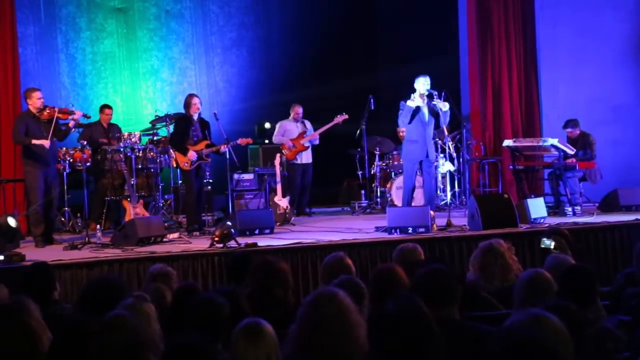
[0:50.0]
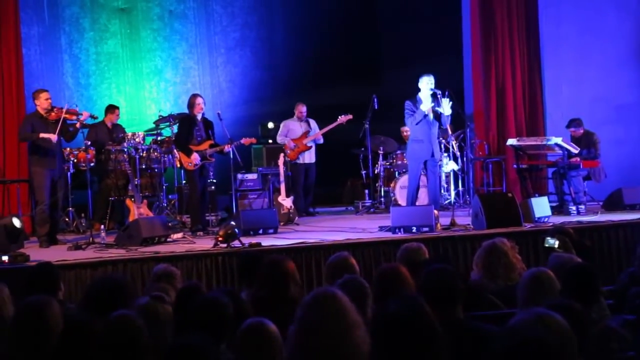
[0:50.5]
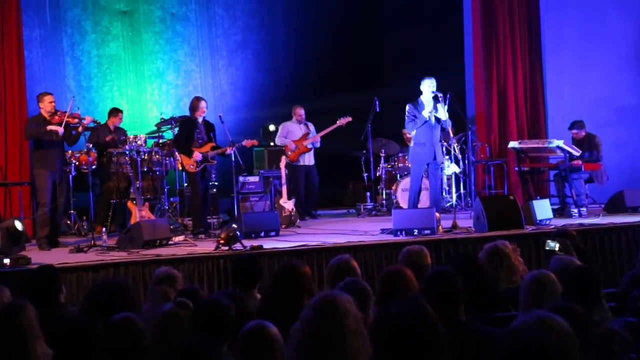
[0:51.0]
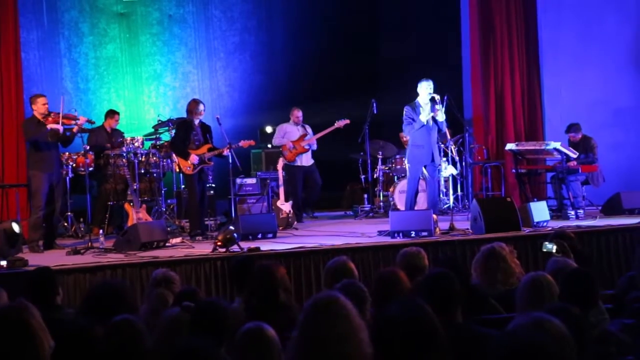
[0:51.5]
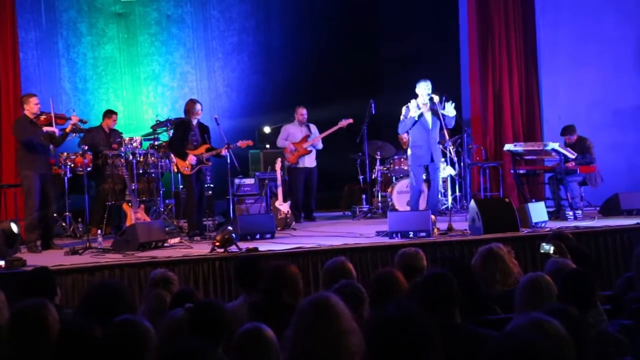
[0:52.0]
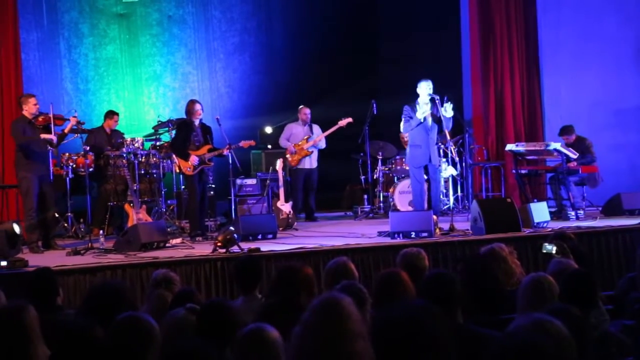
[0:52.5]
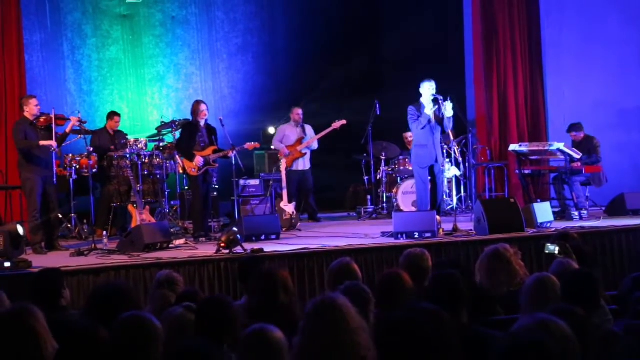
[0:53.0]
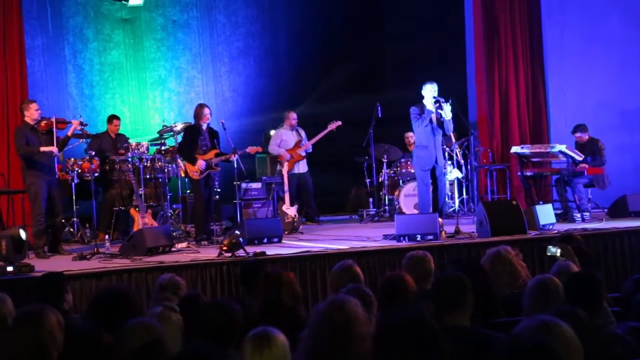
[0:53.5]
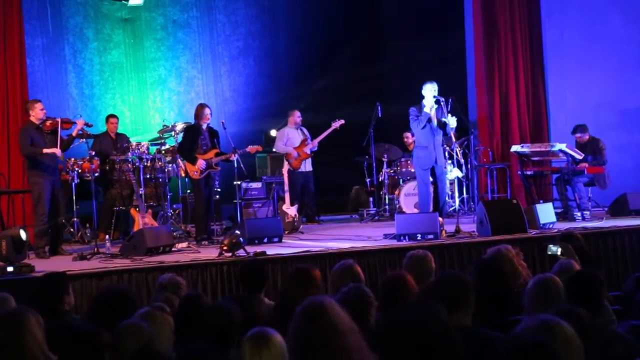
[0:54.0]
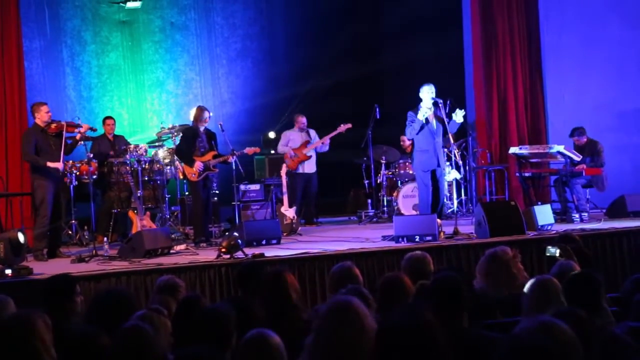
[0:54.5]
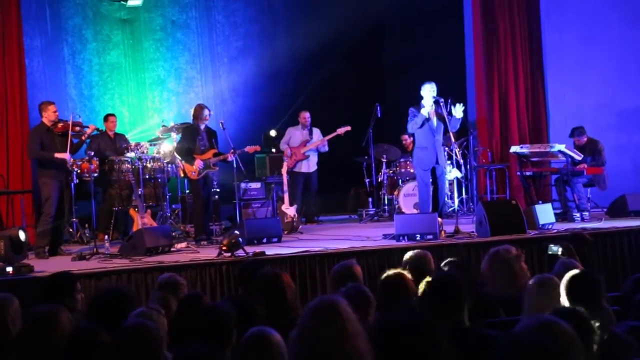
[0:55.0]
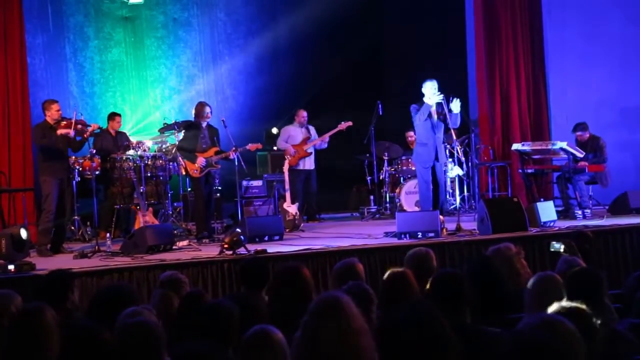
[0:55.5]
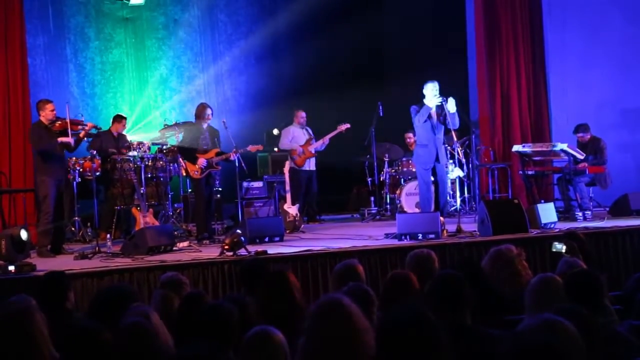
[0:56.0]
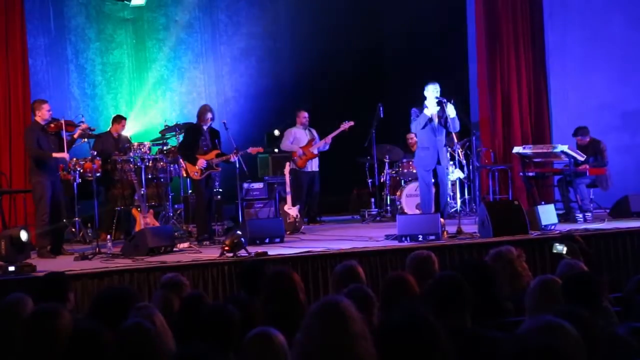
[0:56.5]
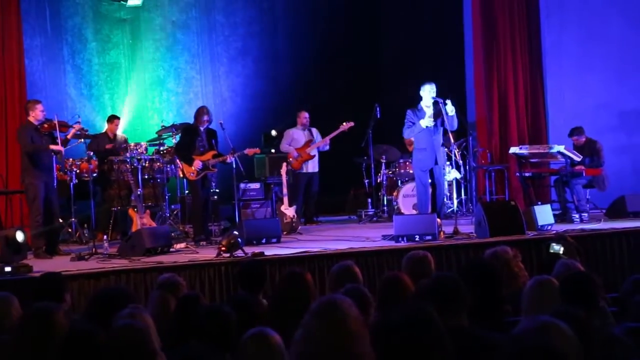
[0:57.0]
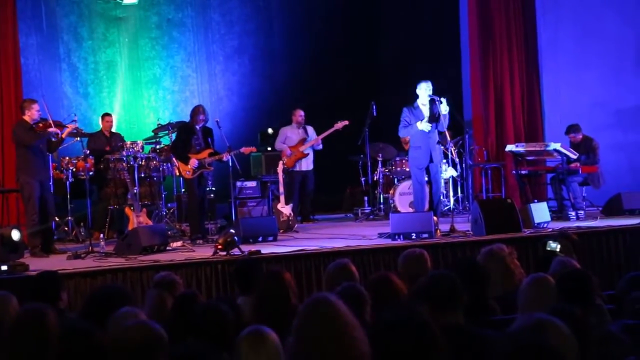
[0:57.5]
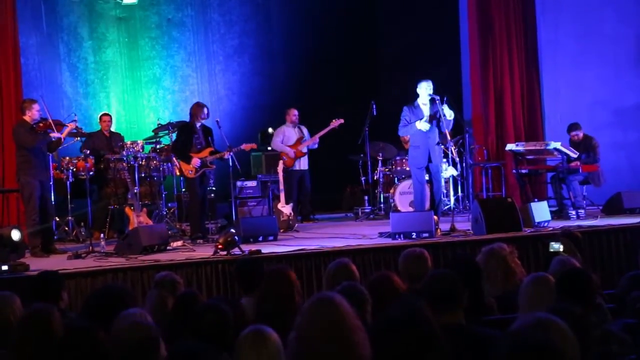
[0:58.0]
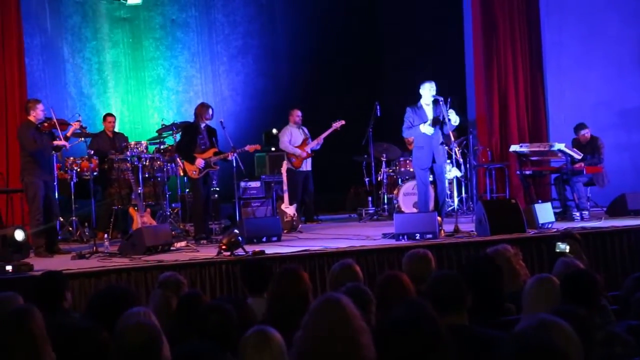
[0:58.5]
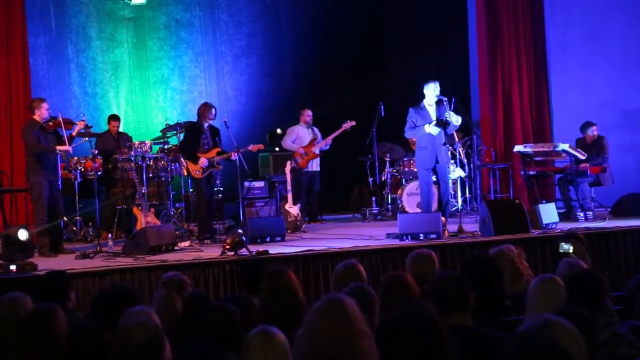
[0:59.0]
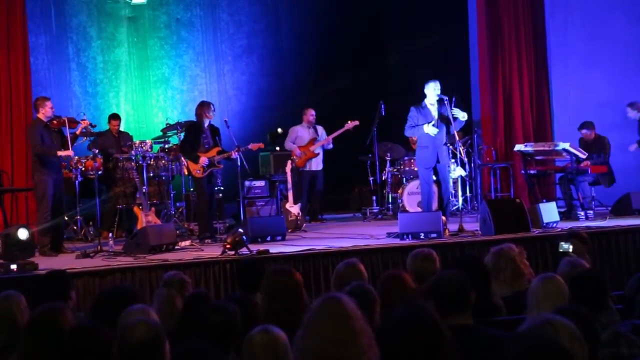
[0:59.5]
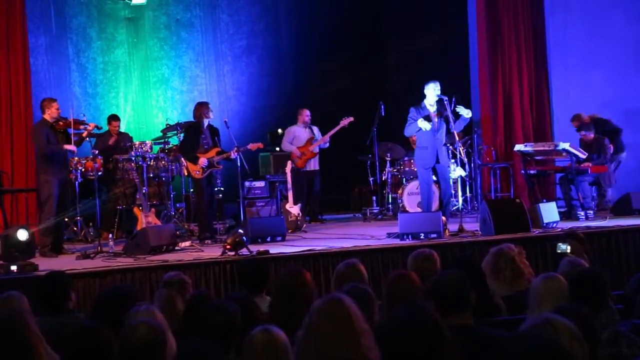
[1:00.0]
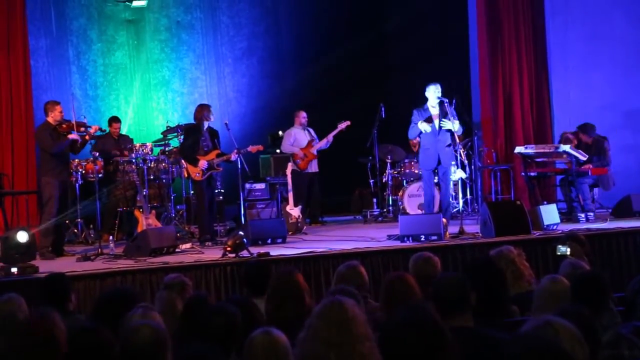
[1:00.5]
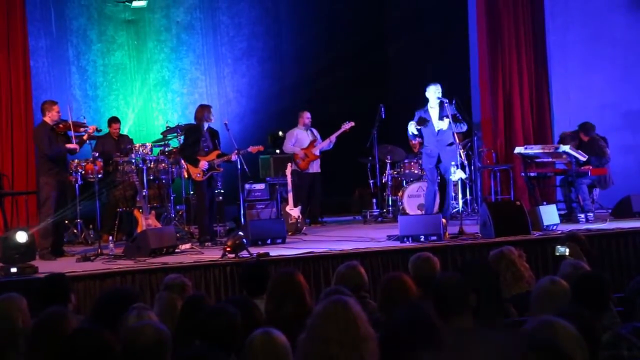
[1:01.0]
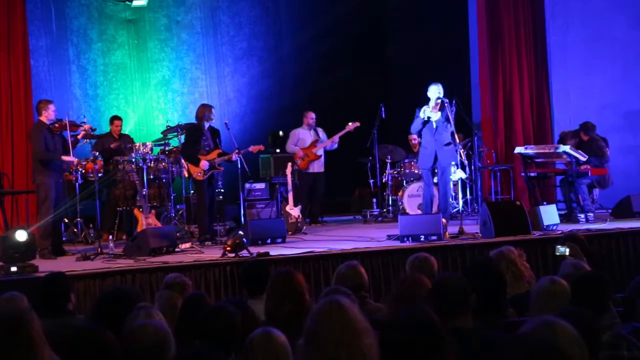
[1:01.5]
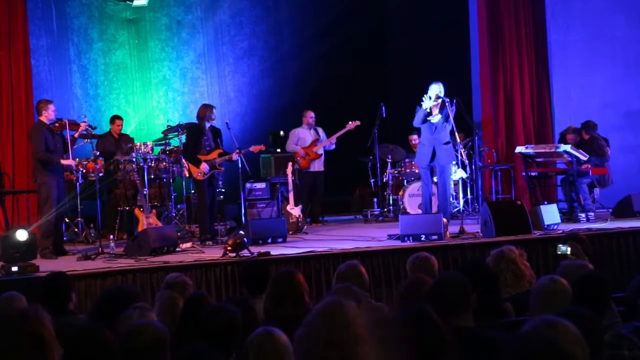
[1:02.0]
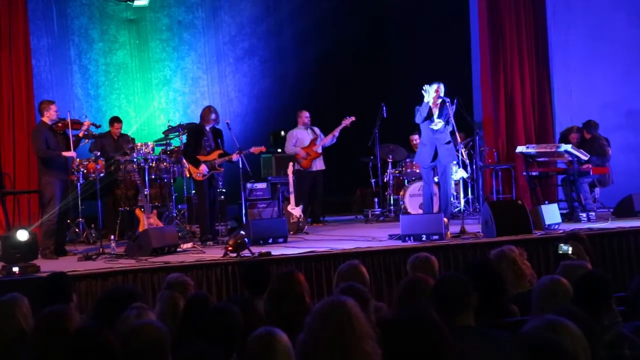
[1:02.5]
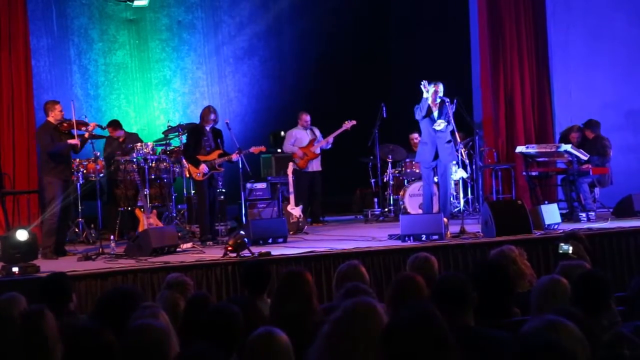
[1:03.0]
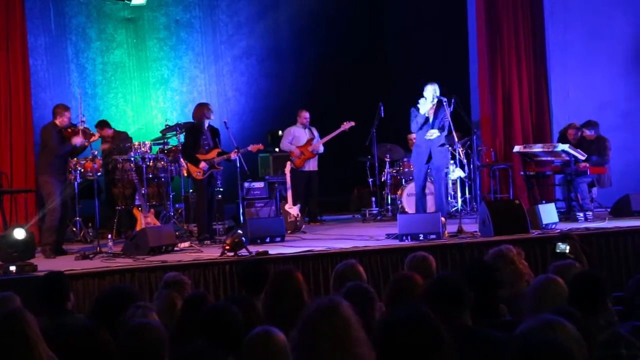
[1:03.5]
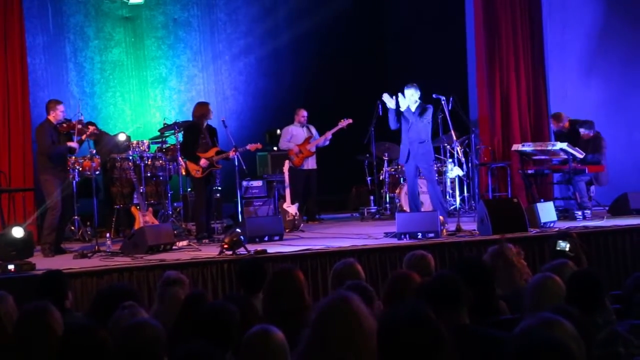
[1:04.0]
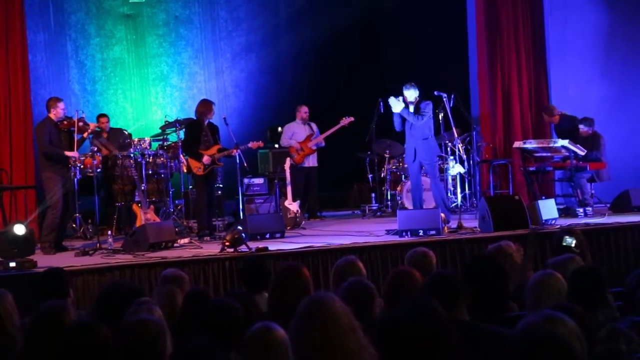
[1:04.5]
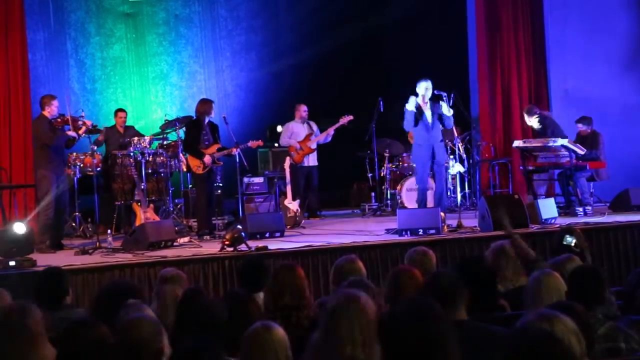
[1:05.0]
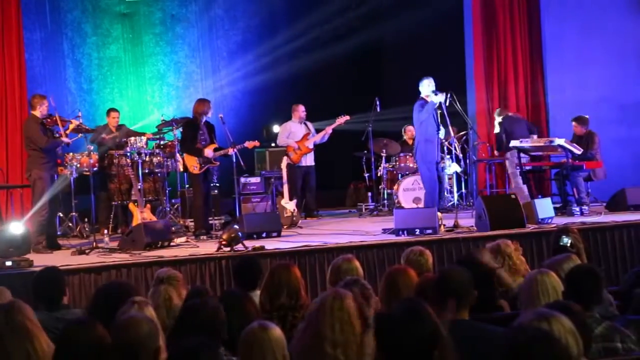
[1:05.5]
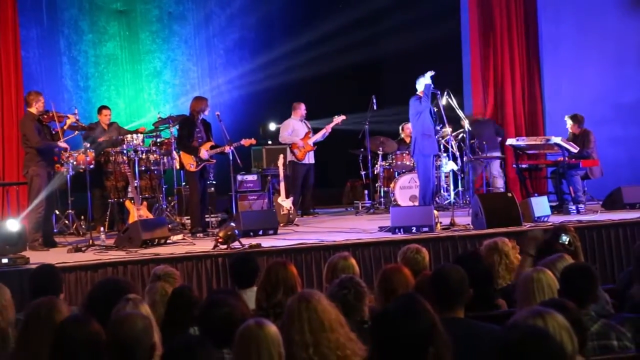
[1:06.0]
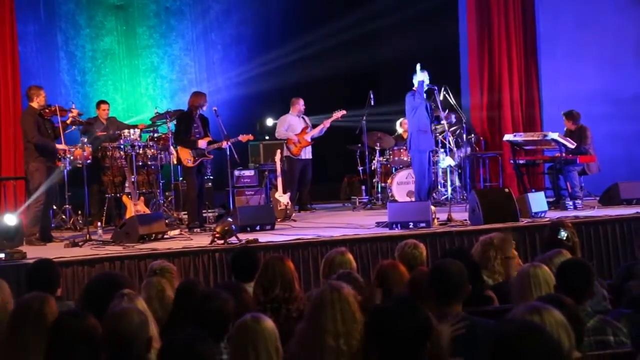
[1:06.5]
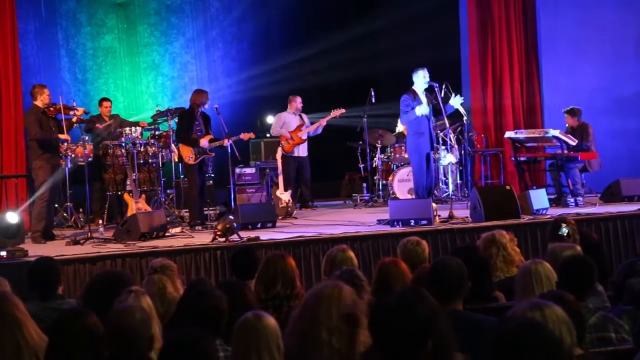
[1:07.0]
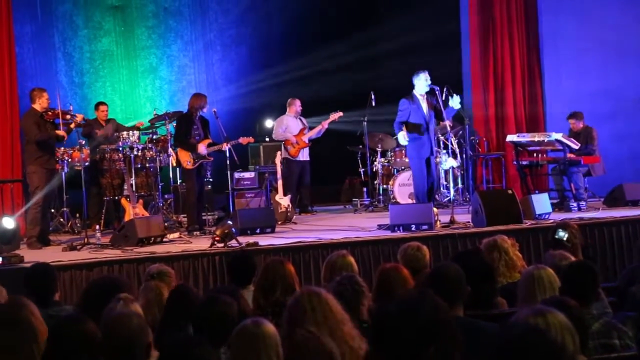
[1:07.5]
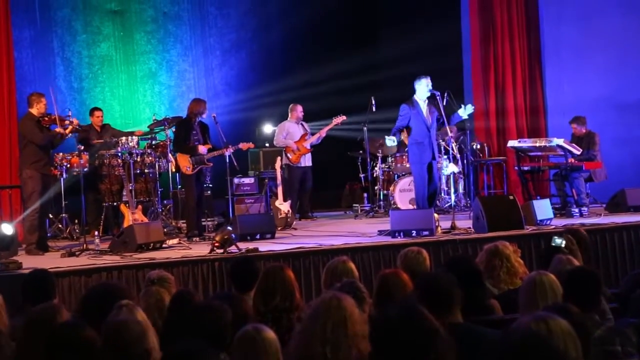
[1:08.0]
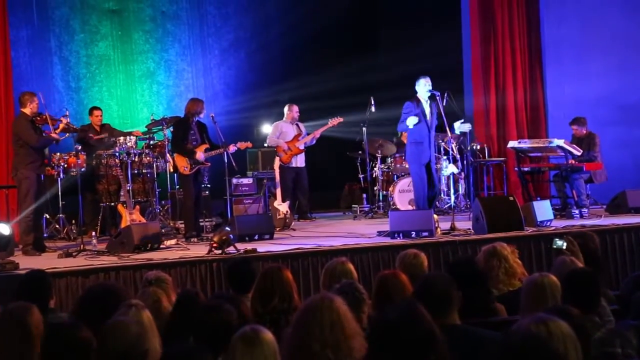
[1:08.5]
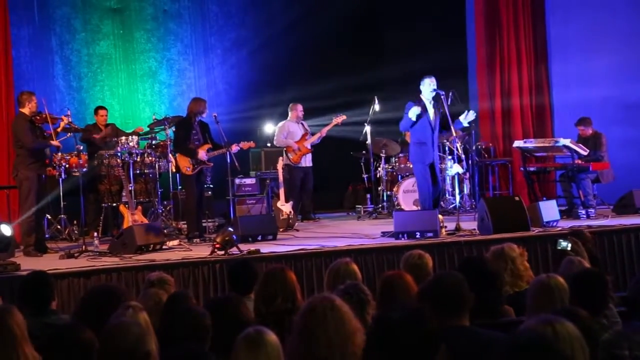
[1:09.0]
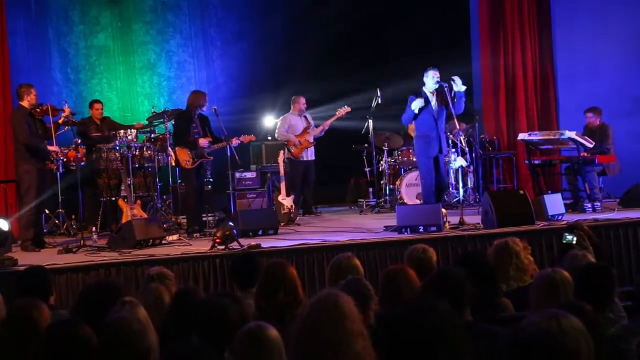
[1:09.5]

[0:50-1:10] The stage has a blue glow, and the center of the backstage is a little aquamarine. The singer's face is completely covered in light, as are his hands. He sings passionately, moving his arms and legs, and makes something like a clam motion with his hands, then a shoe motion. For the most part he keeps his hands to his side, close to his face, making a lot of hand gestures. The rest of the band members are not very expressive and just play their instruments; no one is standing except the keyboardists and the two drummers. There are many amplifiers and speakers on the stage, especially around the edge, spotlights on the edge of the stage, and amplifiers in the back. The crowd is moving around, kind of bopping their heads to the live music but not much, and looks pretty subdued. Only one person near the front, of unclear gender, has a recording device, holding up a digital camera to record the event.